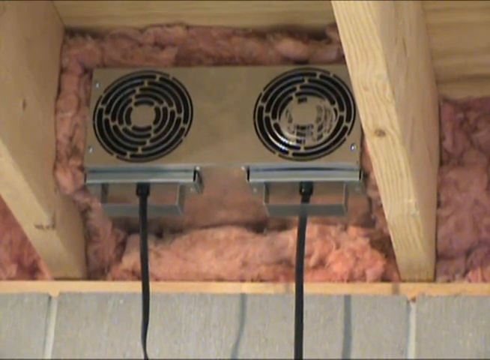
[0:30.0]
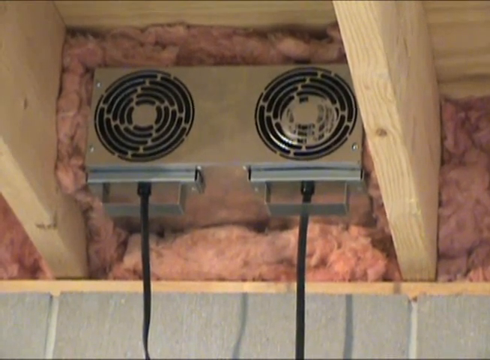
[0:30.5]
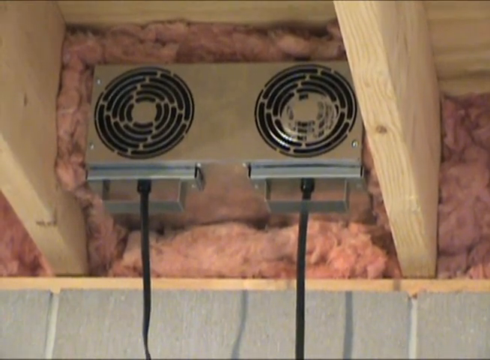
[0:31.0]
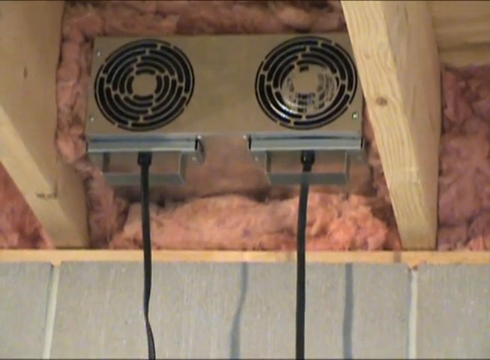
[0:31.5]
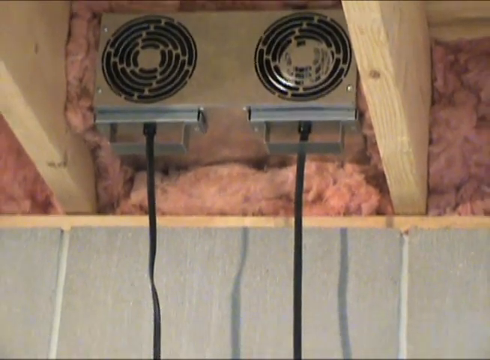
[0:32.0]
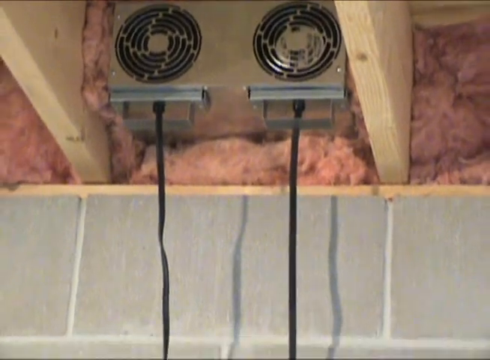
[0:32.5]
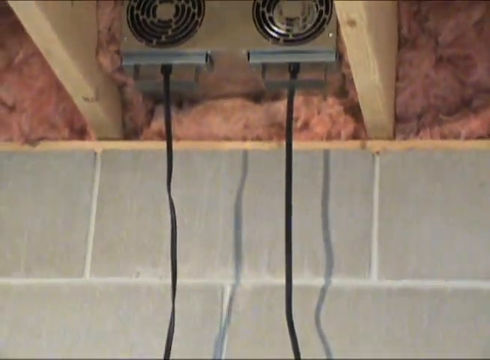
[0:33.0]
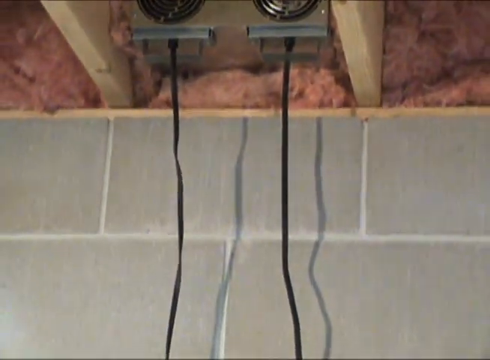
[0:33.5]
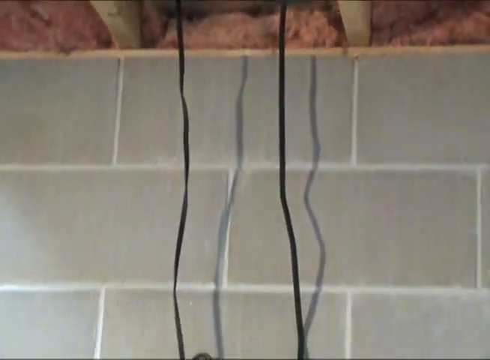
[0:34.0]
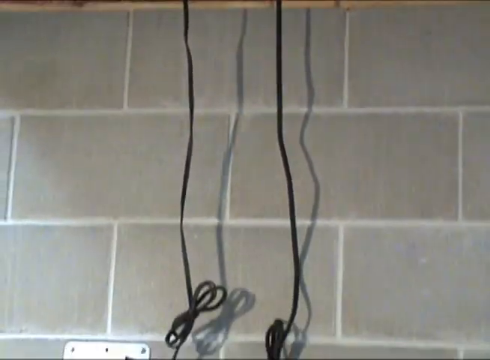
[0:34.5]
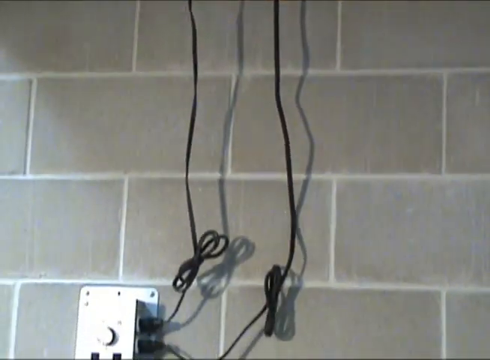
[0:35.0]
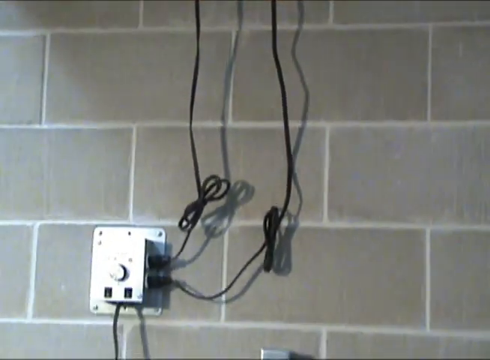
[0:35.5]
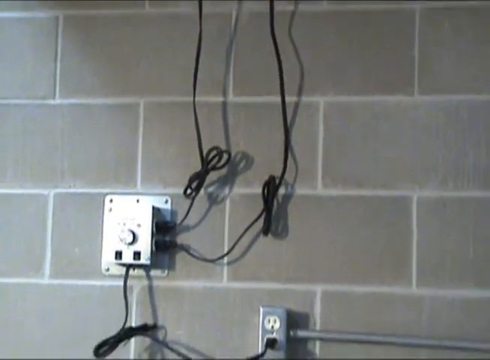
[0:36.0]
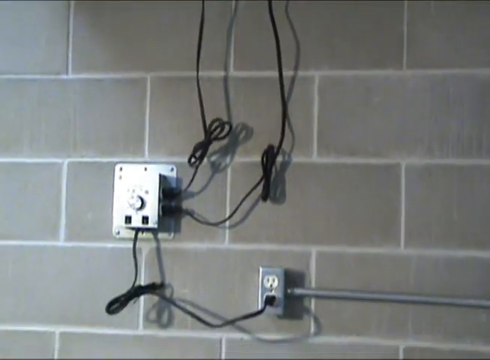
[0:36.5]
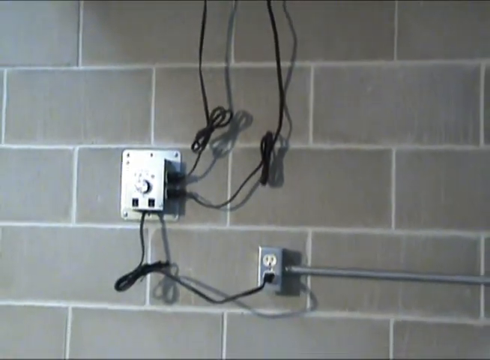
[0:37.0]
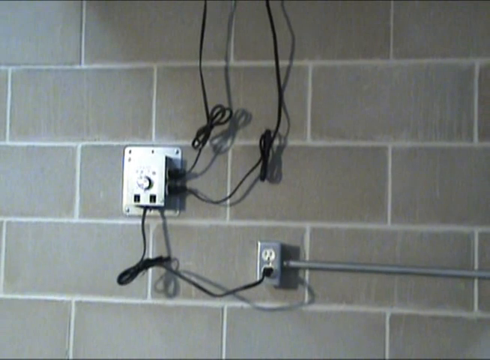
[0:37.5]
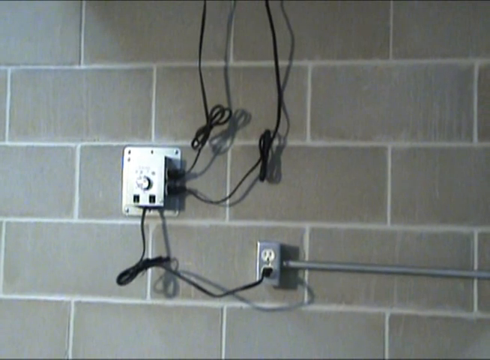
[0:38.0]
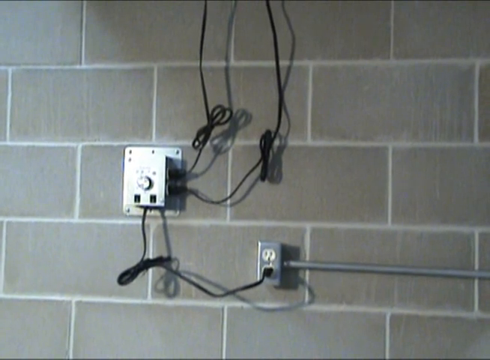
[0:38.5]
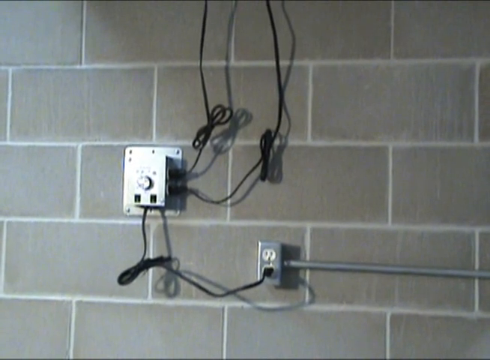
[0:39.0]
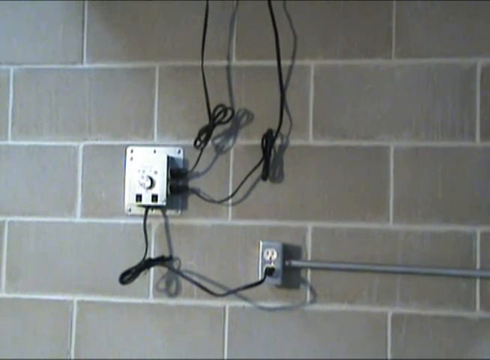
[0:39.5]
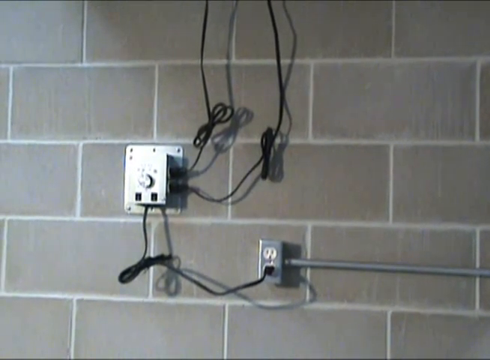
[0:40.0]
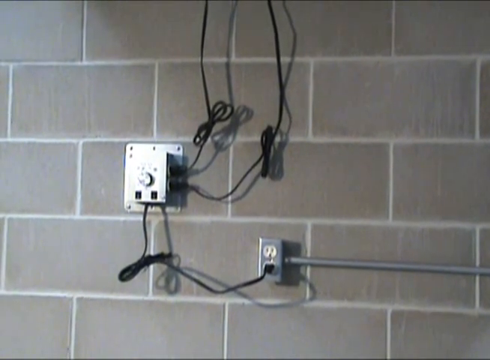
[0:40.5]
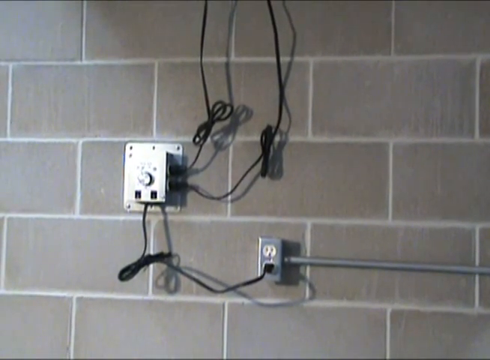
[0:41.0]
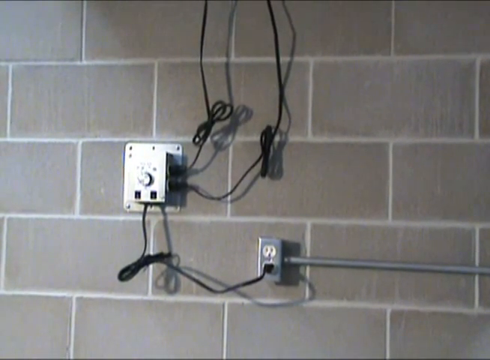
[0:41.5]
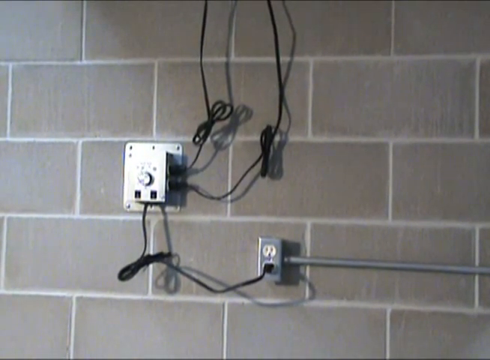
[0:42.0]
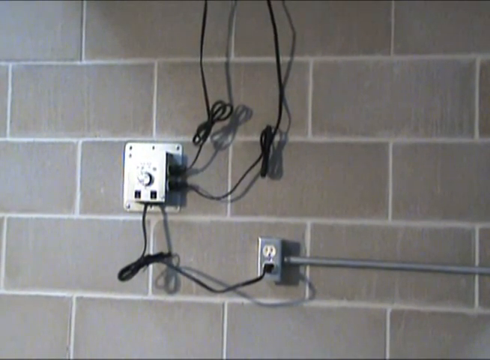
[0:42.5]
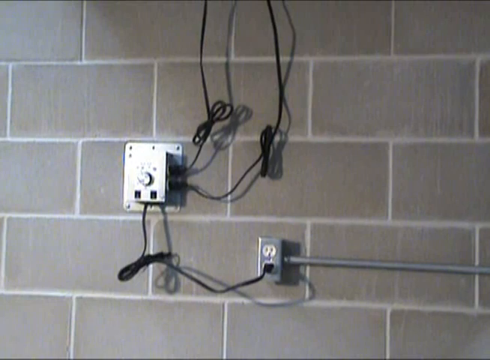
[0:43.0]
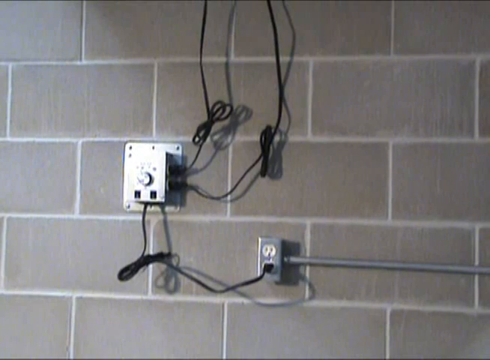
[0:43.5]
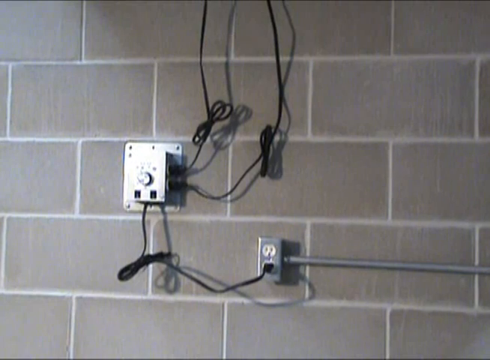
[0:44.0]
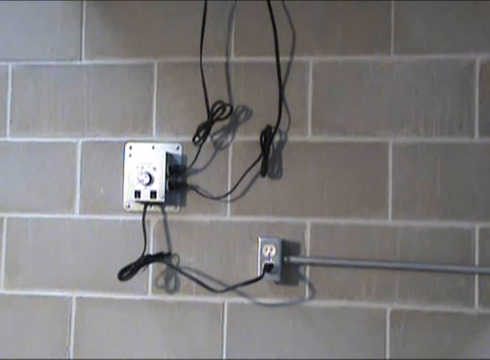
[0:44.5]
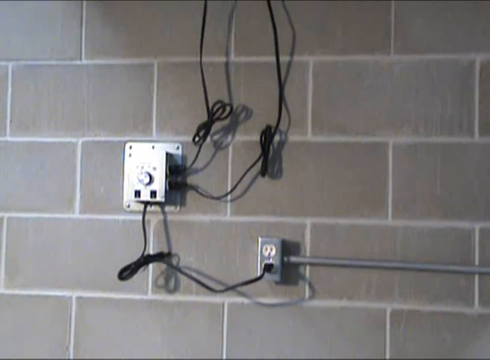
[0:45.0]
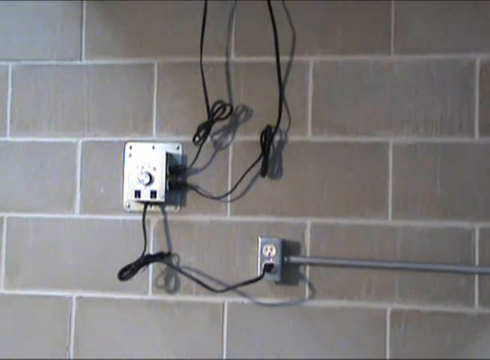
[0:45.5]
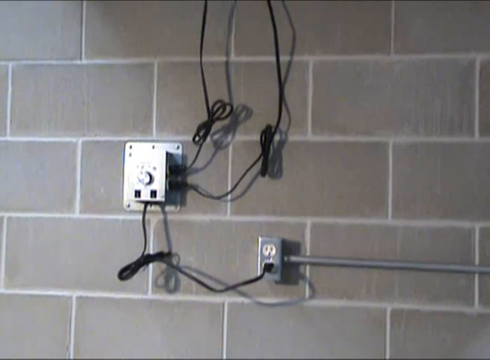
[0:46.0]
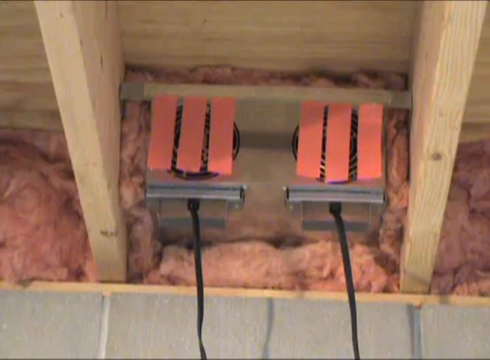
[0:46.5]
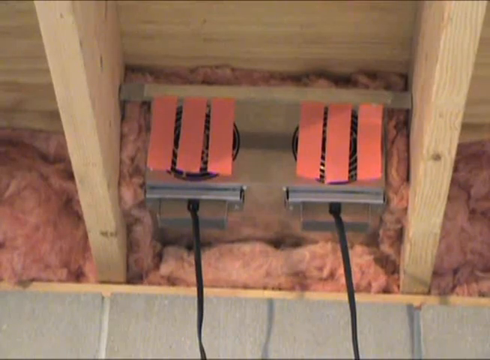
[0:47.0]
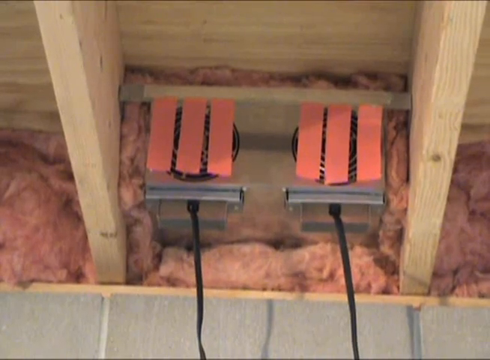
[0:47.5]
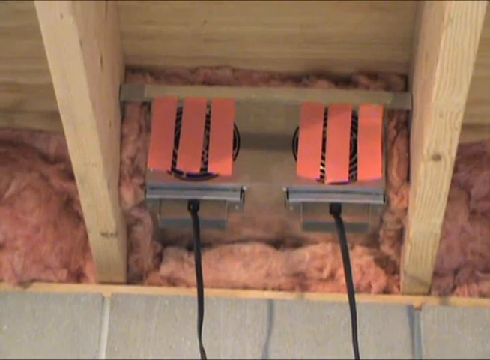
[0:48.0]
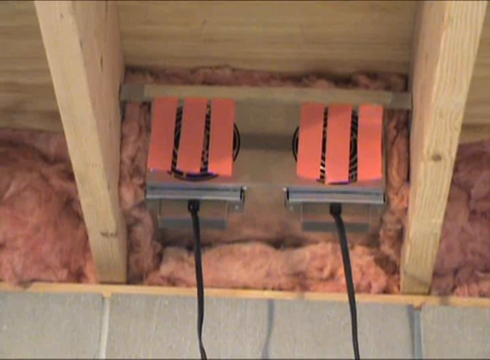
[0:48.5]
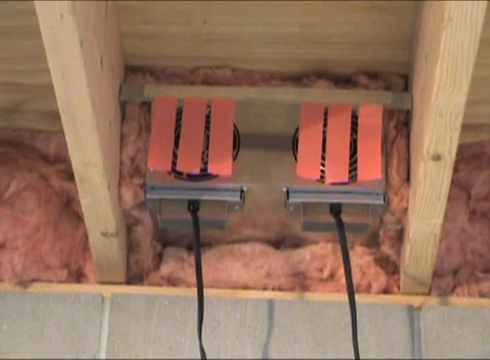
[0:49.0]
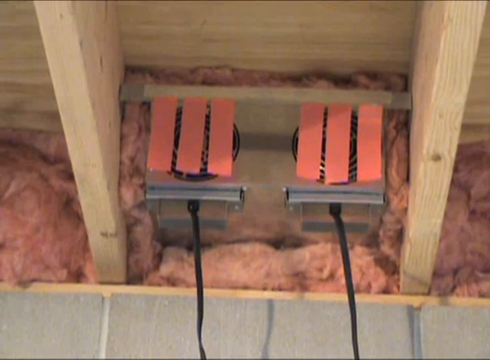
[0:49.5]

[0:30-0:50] Wooden rafters sit on top of a concrete breeze block wall, with pink fiberglass insulation between them. Between two of the horizontal rafters is a silvery metal fan unit with two circular grilles, presumably with two fans behind them, and two black electrical leads lead from the unit. The video zooms out and down to show the breeze block wall, where the black electrical cables plug into a control unit with a rotary dial. The control unit is screwed into a silvery metal plate that attaches it to the wall, and from there a power lead attaches to an electrical outlet with two sockets. The outlet is a metal box with a metal cable guide and conduit heading horizontally off to the right, and its sockets are two-pin sockets. The black electrical cables leading to the control unit and the electrical socket have been looped up and tied to reduce their length.